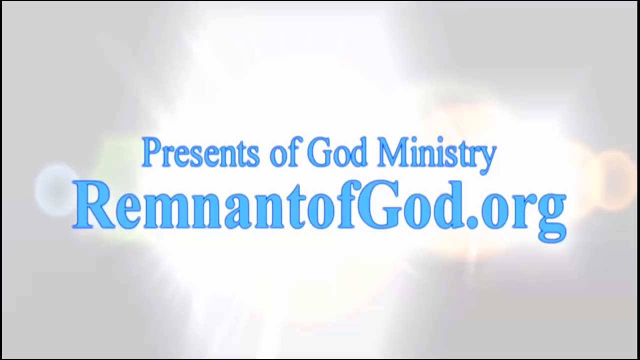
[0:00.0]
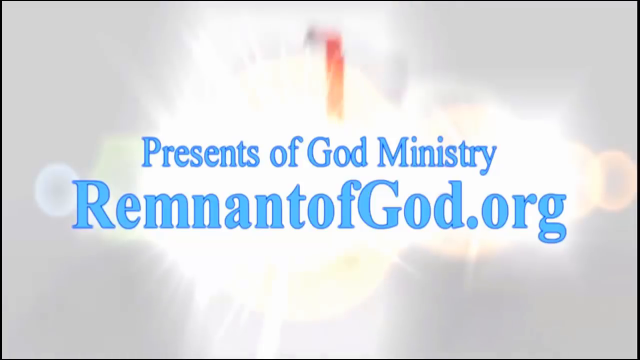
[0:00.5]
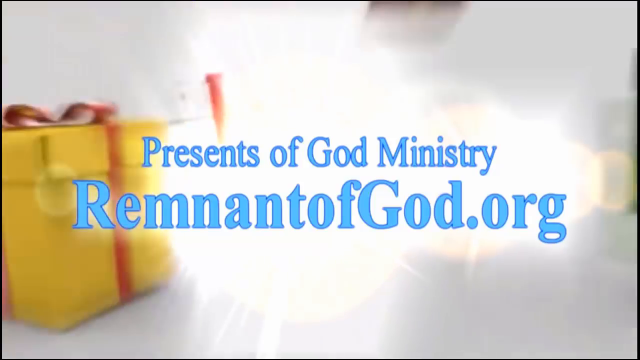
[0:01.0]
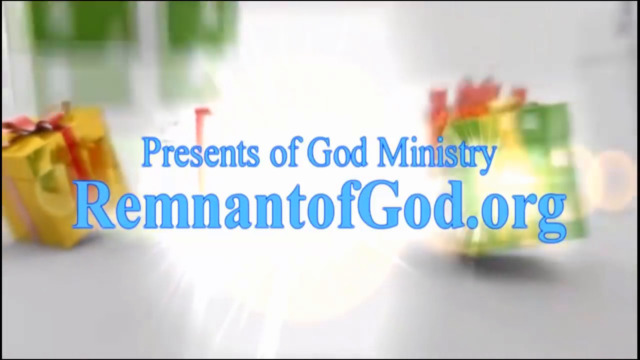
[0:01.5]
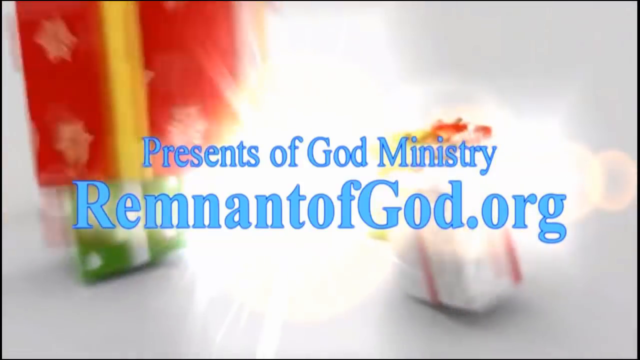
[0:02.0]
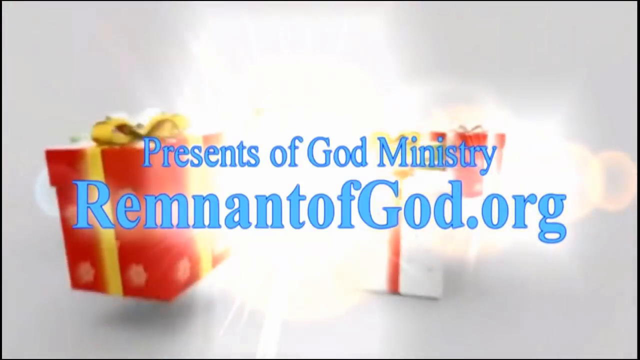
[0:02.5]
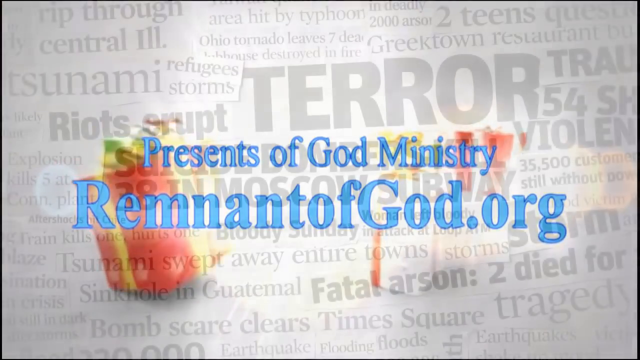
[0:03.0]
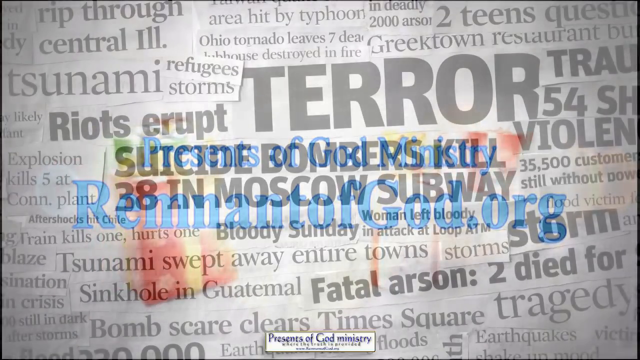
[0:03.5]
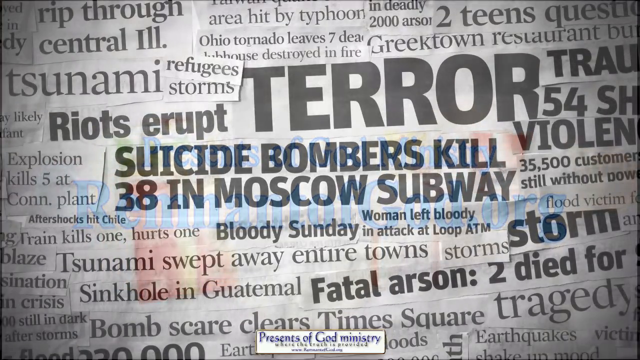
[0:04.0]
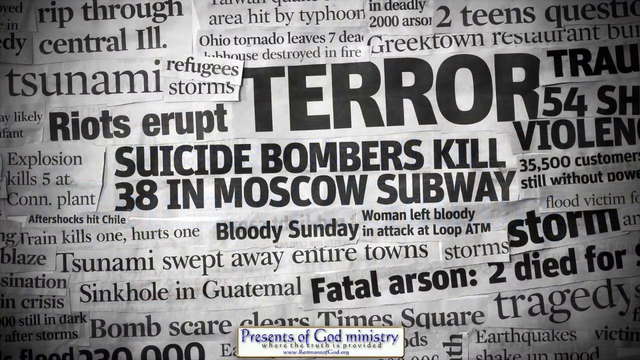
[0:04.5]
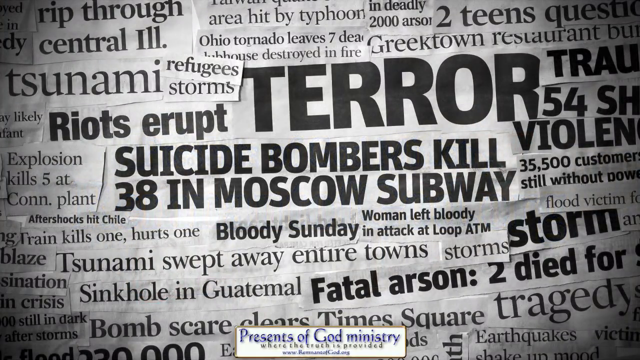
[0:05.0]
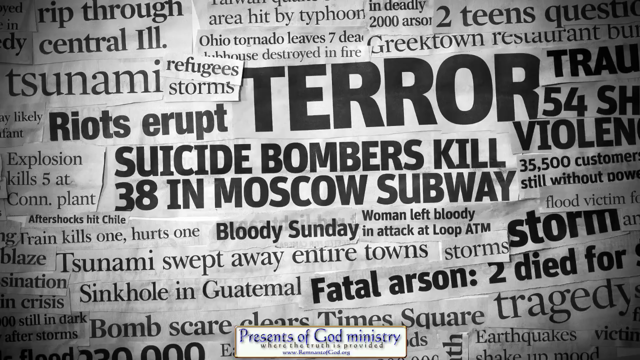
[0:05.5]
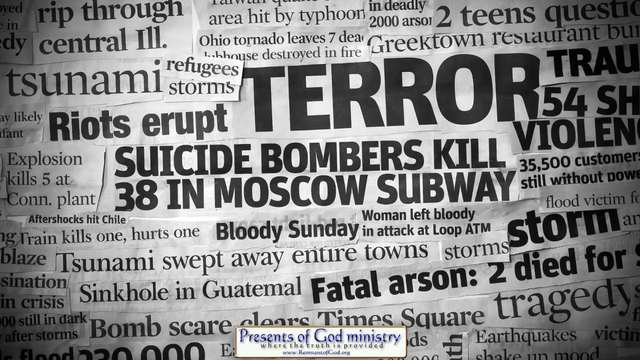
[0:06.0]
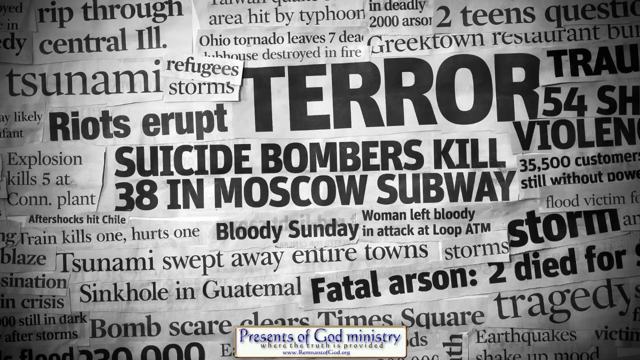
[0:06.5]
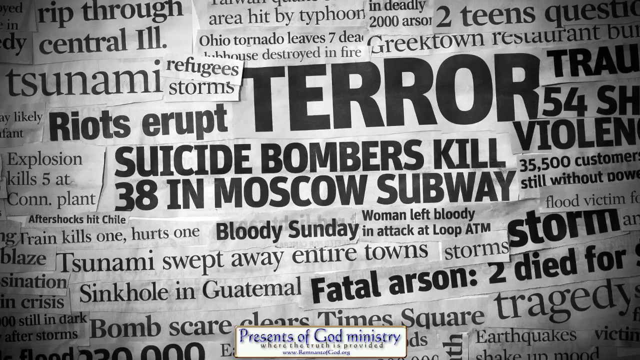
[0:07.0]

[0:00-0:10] The video opens with light blue text reading "Presence of God Ministry, Remnant of God.org" on a somewhat white background, with a light flashing fairly brightly toward the viewer. Presents fall very quickly from the top of the screen and land: red, green and white presents with bows of different colors. This slowly transitions to what looks like a collection of newspaper articles, the main one reading "Suicide bombers kill 38 at Moscow subway". Right above it, another news article says "riots erupt".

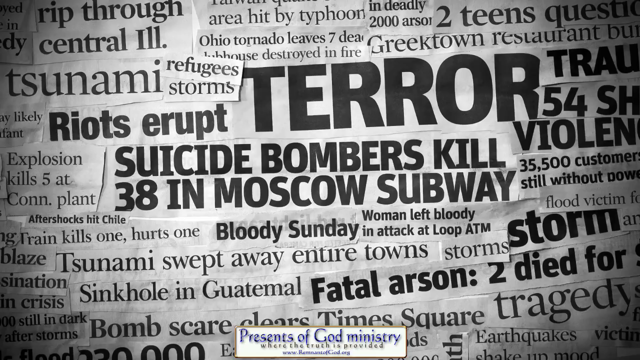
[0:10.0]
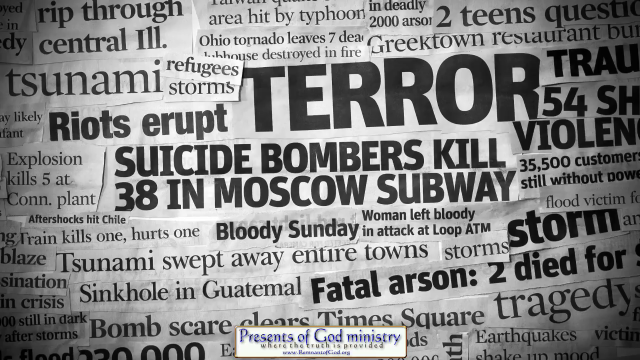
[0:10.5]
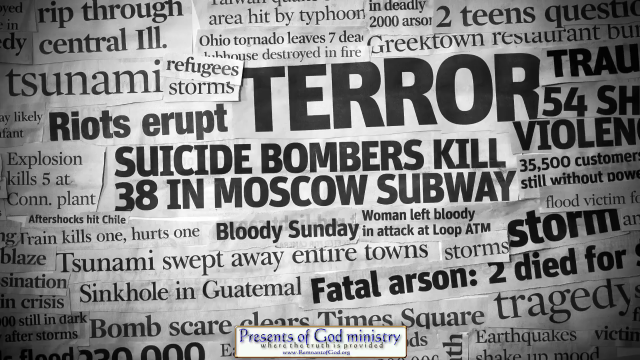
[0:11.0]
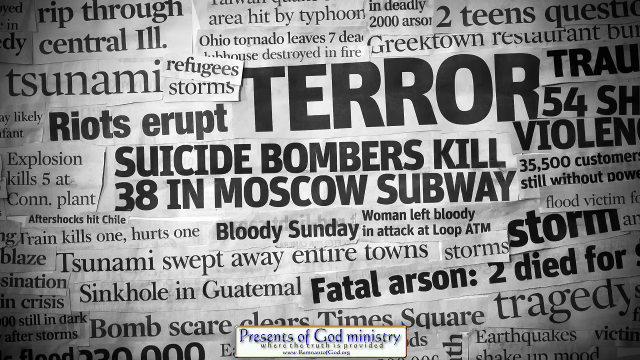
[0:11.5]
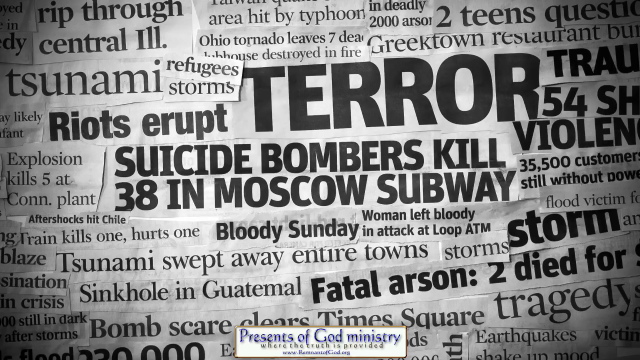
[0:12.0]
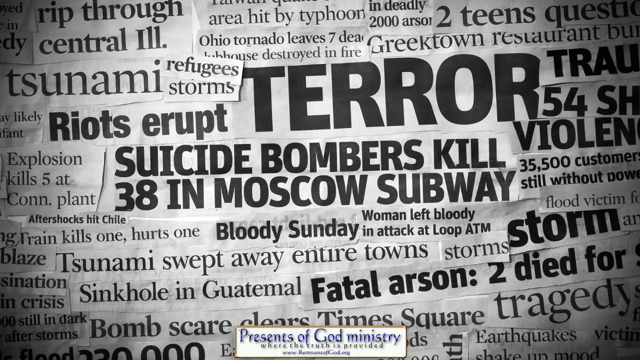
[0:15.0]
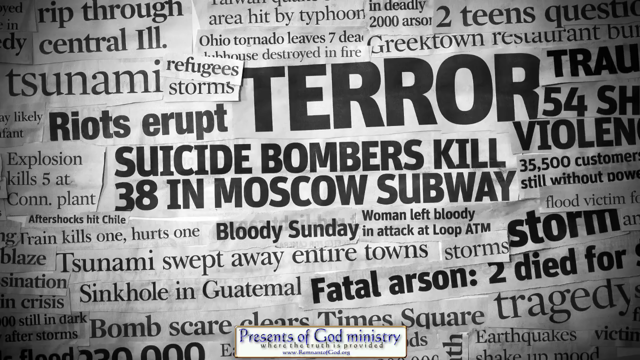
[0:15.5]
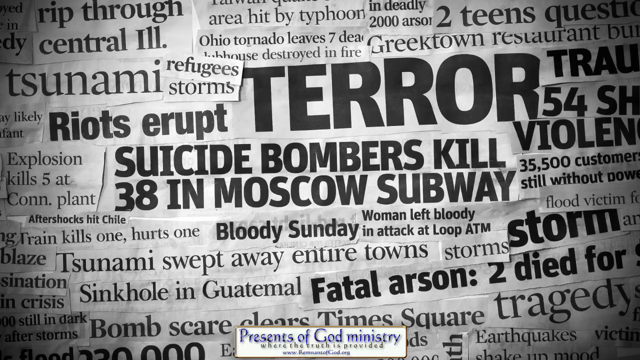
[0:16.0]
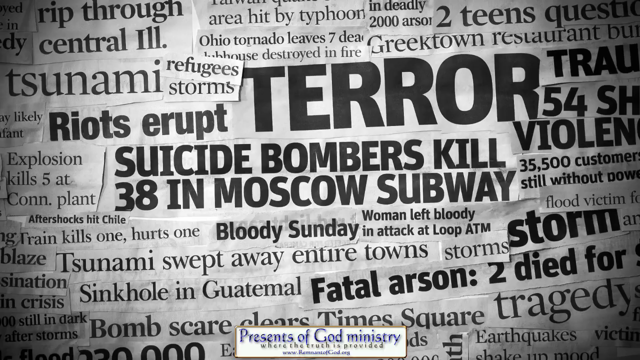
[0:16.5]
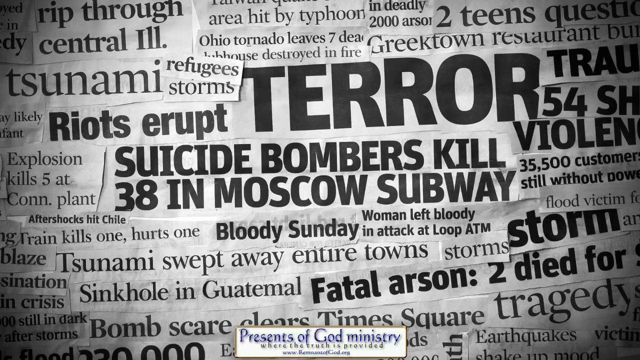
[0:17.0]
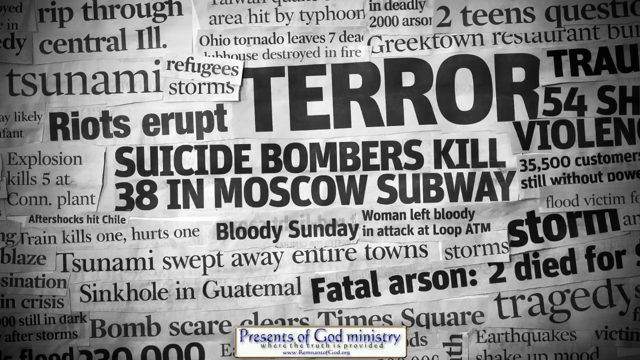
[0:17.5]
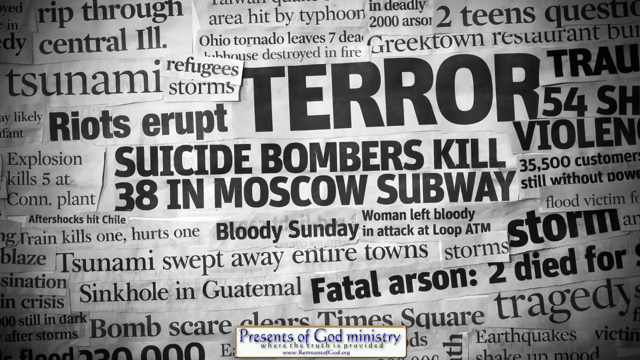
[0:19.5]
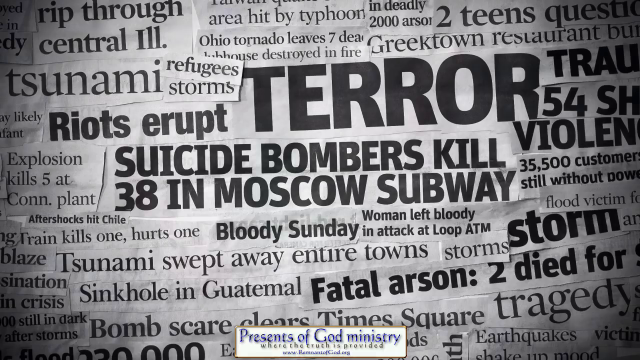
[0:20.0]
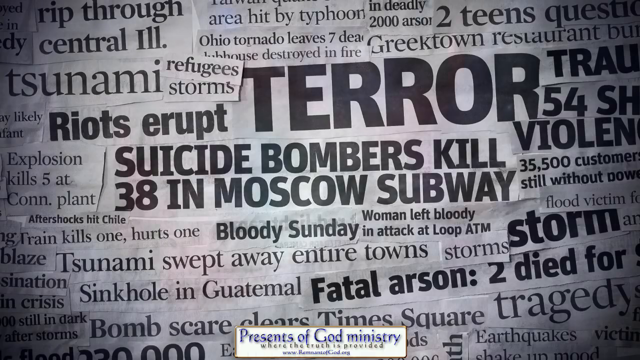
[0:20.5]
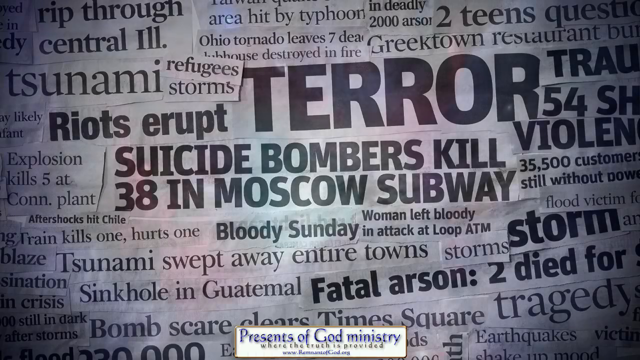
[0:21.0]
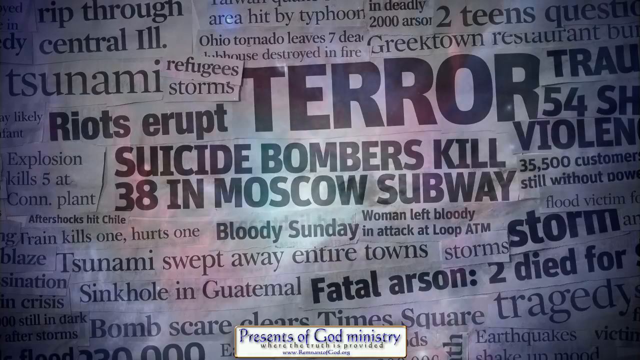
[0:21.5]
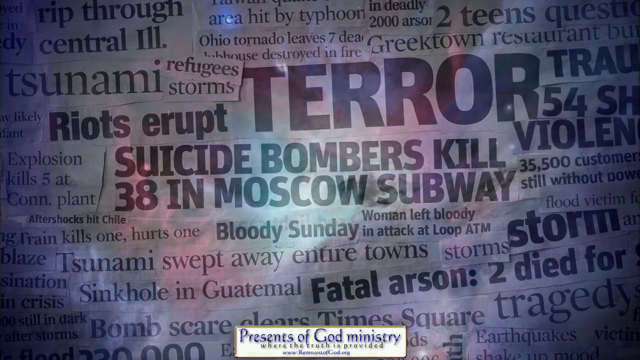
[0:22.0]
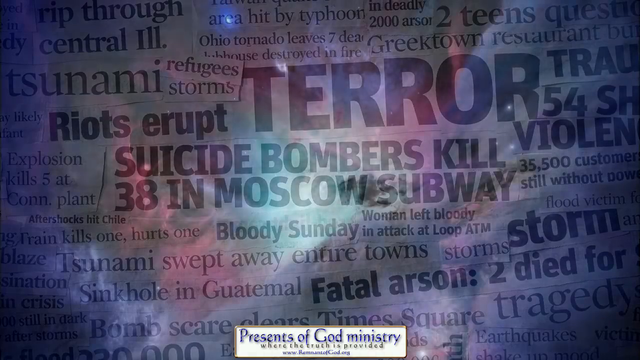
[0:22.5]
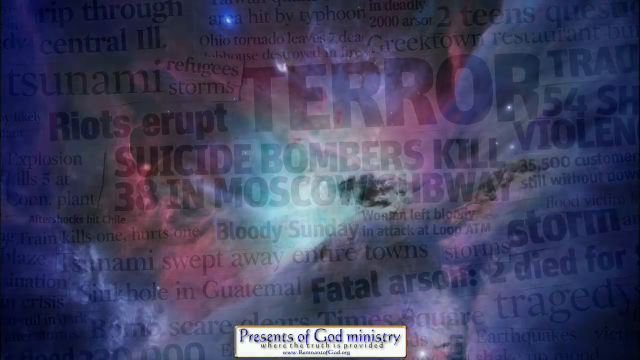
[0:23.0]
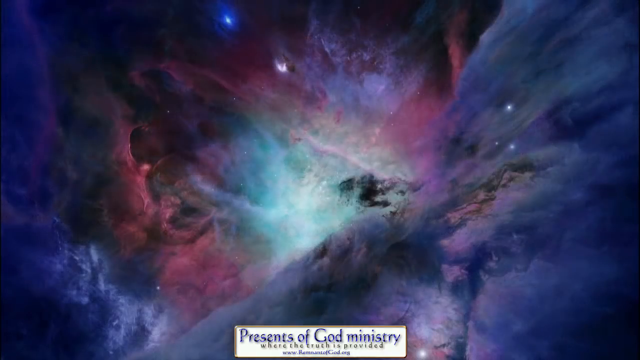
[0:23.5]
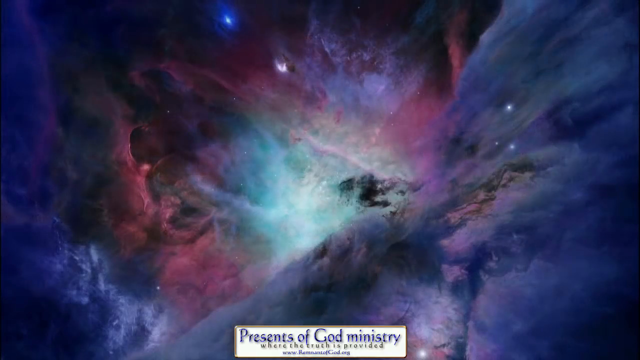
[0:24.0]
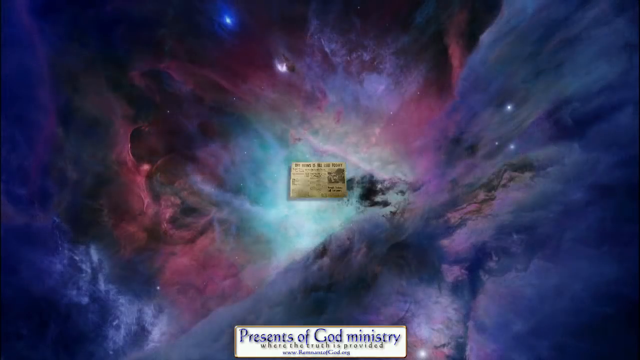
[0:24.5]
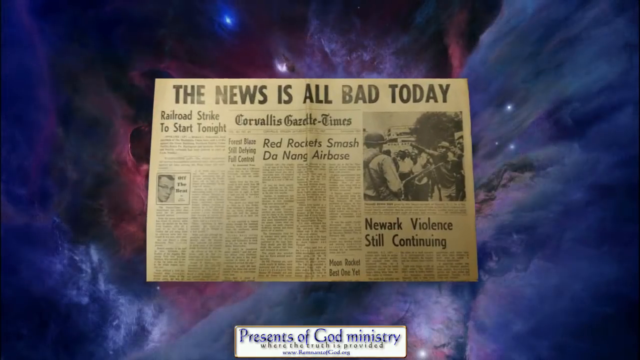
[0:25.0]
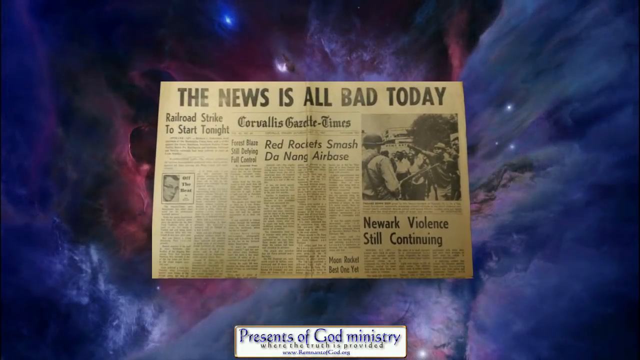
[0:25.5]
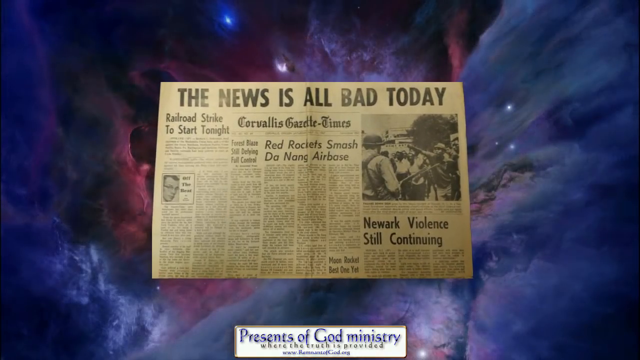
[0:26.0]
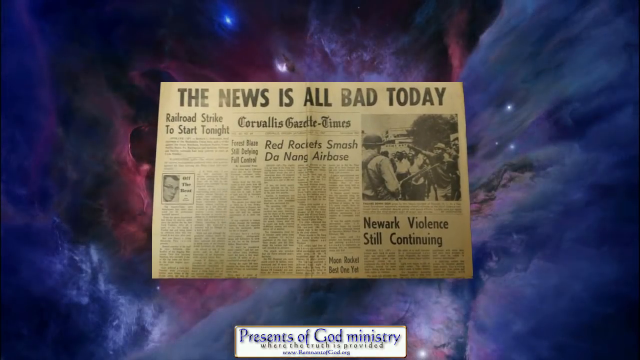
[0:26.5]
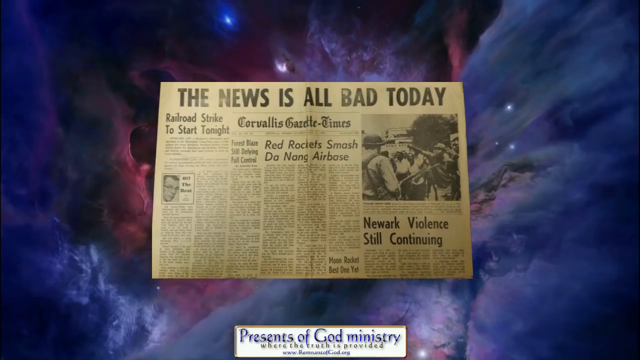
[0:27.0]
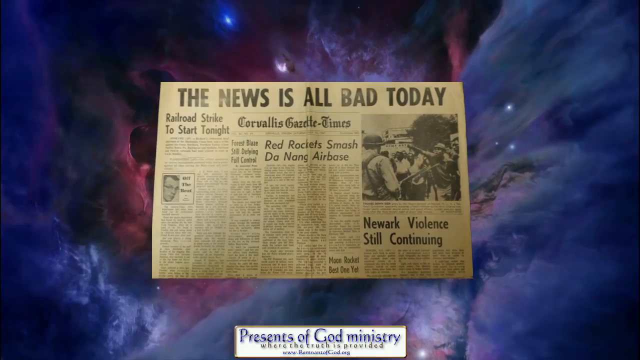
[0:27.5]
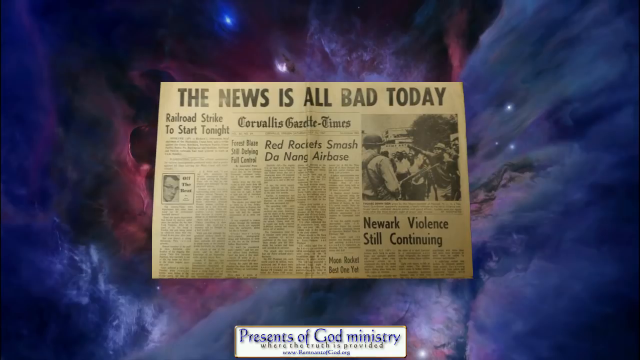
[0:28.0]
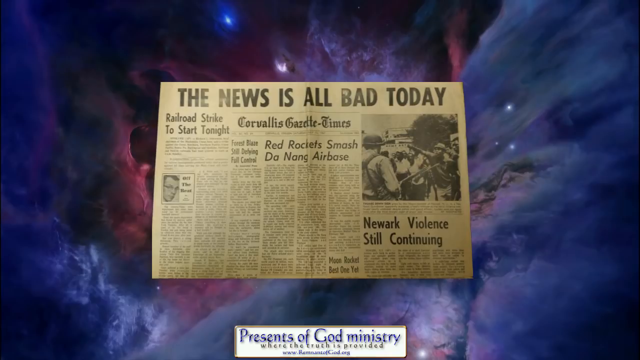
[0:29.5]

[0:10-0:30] The newspaper headlines are all black and white and pasted around one another, with the main one reading "Suicide bombers kill 38 in Moscow subway". This stays on screen for about five seconds. Then, in a very slow transition, the newspaper article disappears, revealing what looks like an outer space background with gray, blue and pink clouds. Quickly, out of that deep space, a newspaper comes up front. Across the top it reads "the news is all bad today", and it contains several articles. The newspaper is a yellowish color, almost like a very old newspaper that has been sitting around for years.